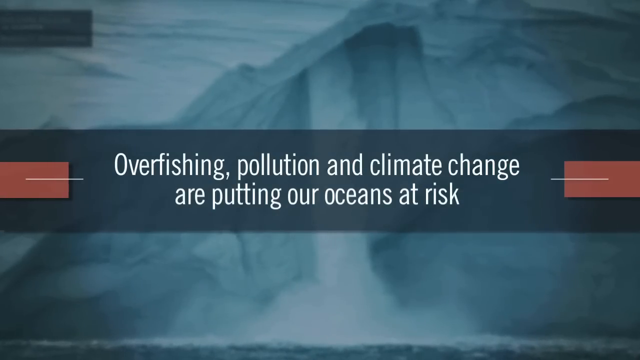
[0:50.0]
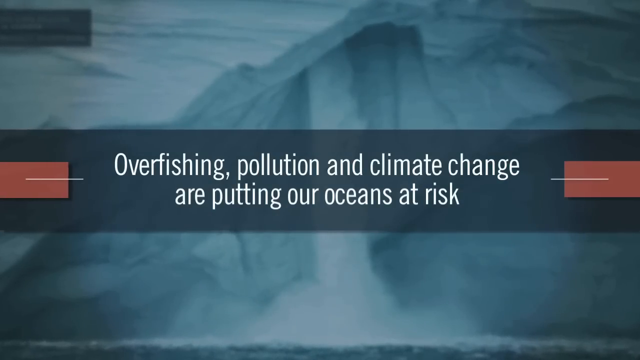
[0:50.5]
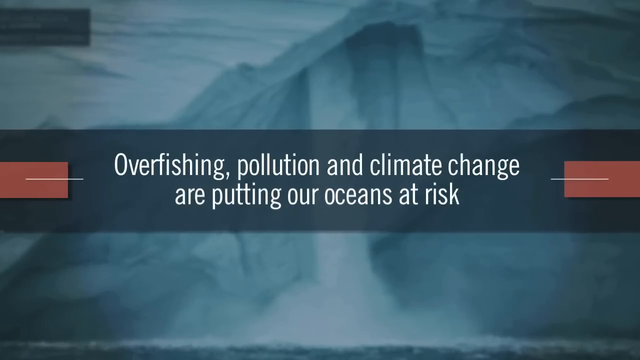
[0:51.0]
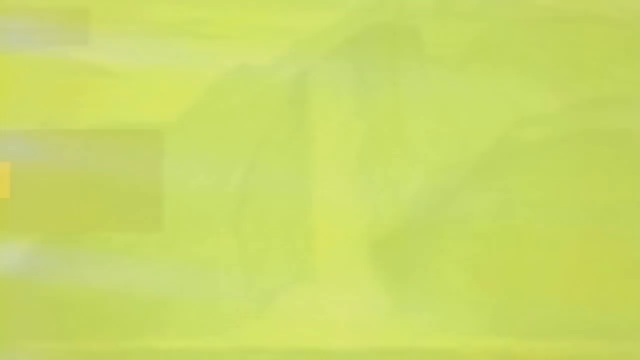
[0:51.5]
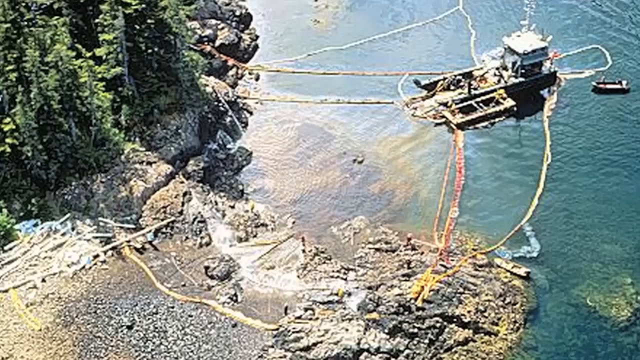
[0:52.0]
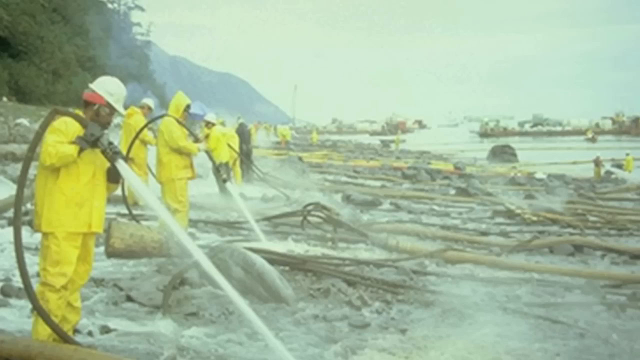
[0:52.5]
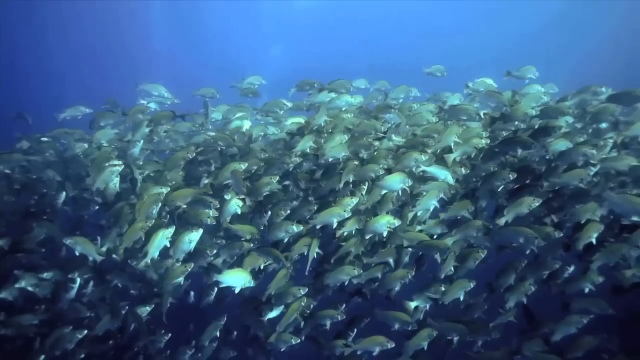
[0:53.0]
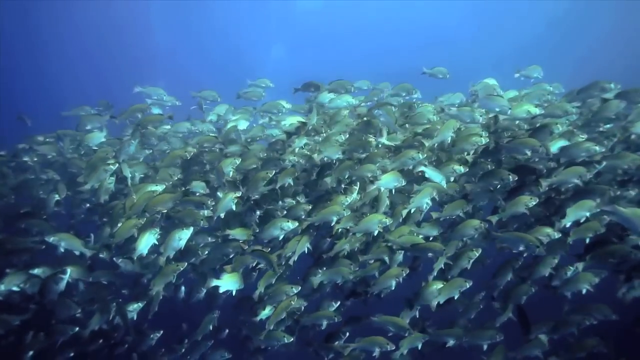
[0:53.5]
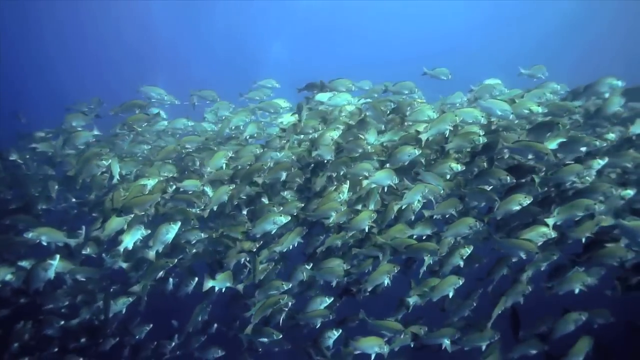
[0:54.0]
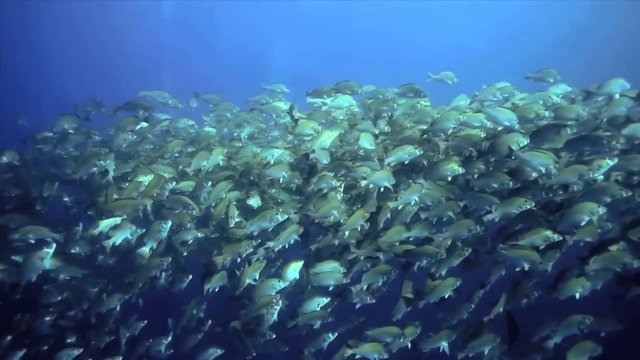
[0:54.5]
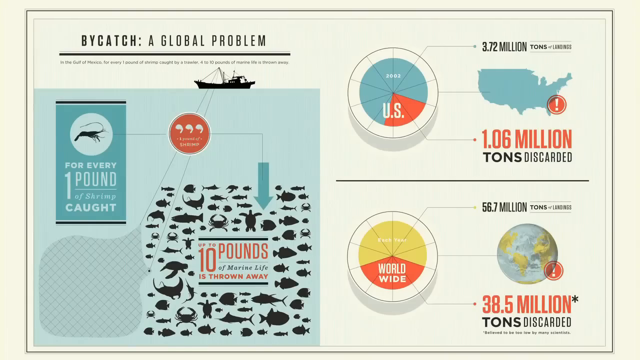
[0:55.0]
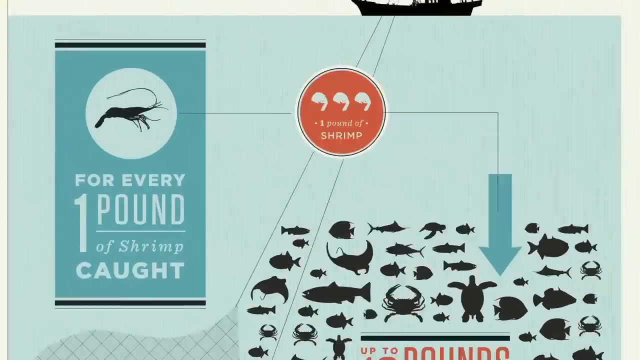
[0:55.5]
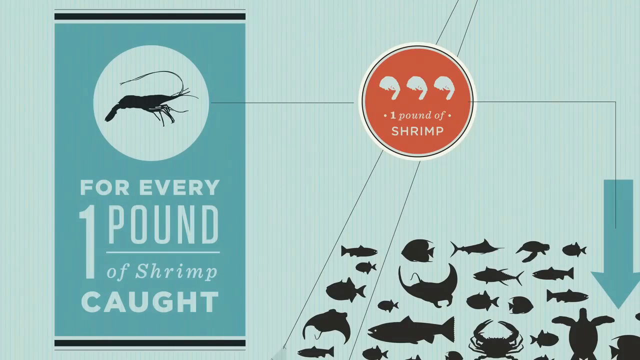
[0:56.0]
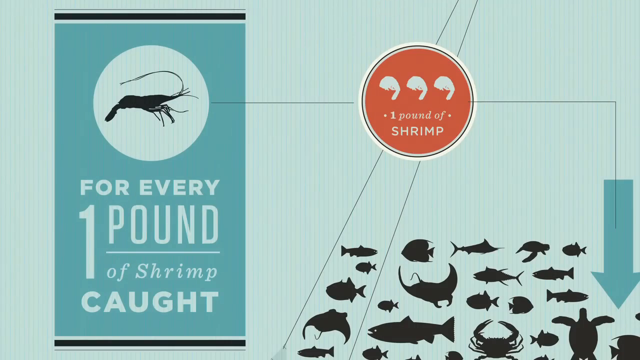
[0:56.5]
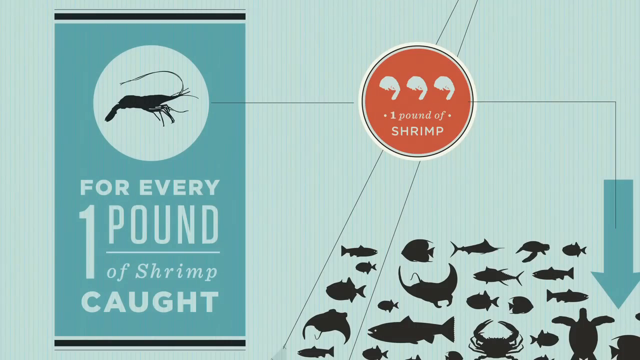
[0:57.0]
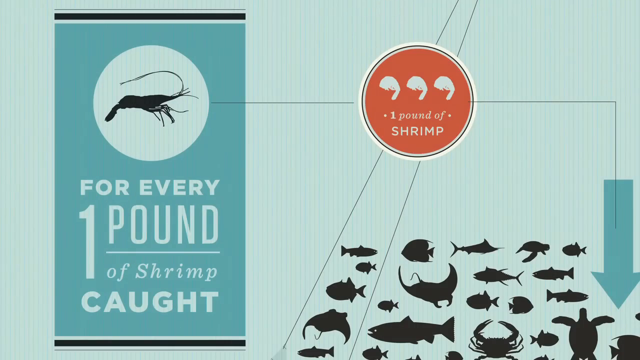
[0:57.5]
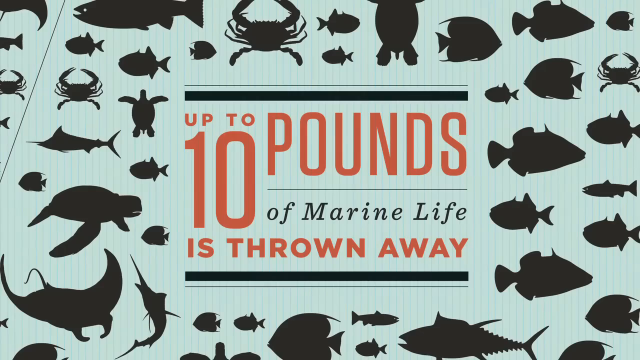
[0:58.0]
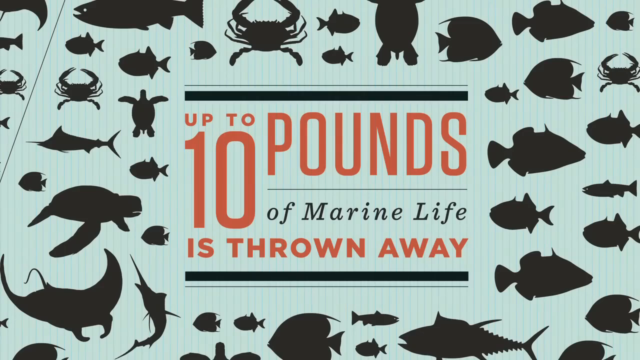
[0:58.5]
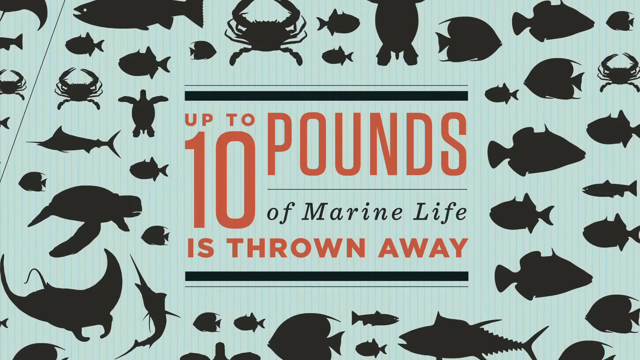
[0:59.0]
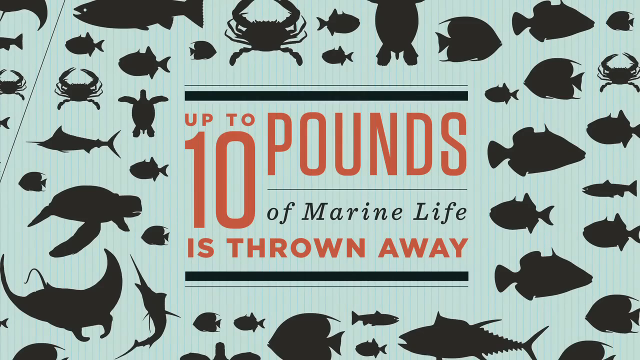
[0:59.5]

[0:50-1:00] The graphic reading "overfishing, pollution, and climate change are putting our oceans at risk" is still on screen. A zoomed-out view of a fishing boat follows, then an oil rig somewhat close to the shore with trees on the left. People stand on the beach with hoses. A school of fish, with a lot of fish, swims in the water. The view changes to a graphic that says "bycatch a global problem" and "for every one pound of shrimp caught up to 10 pounds of marine life is thrown away." It also says "1.6 million tons discarded" and "Worldwide, 3.5 million tons discarded." The camera zooms in on the one pound of shrimp graphic and then on the up to 10 pounds of marine life is thrown away graphic.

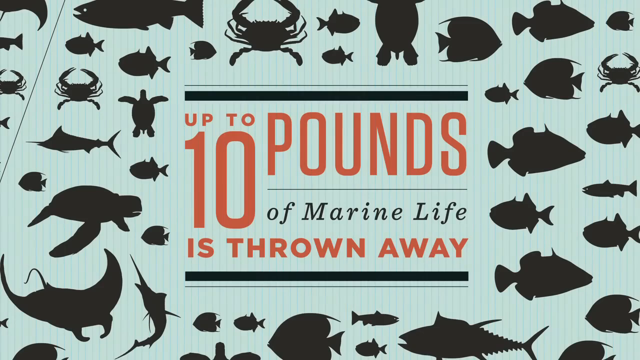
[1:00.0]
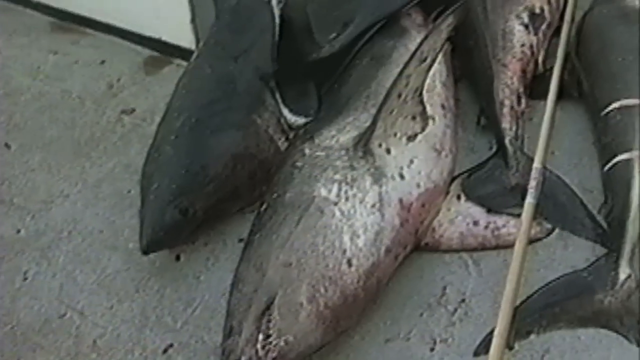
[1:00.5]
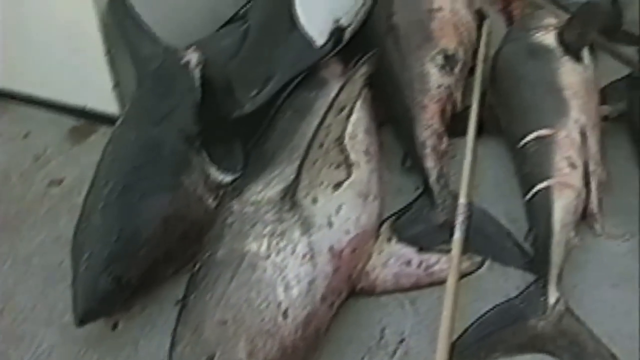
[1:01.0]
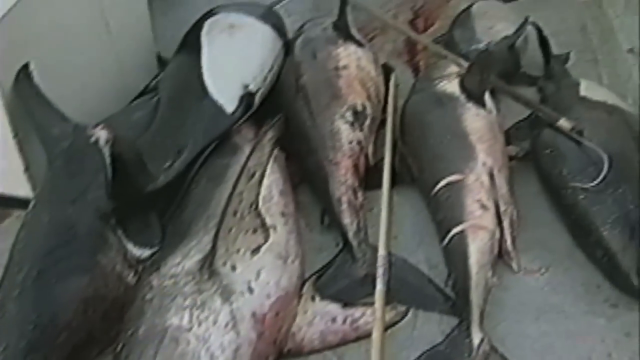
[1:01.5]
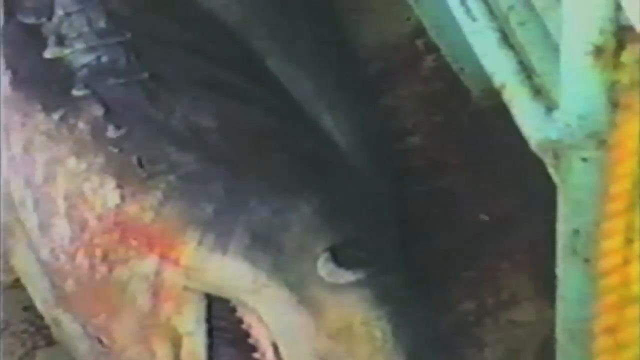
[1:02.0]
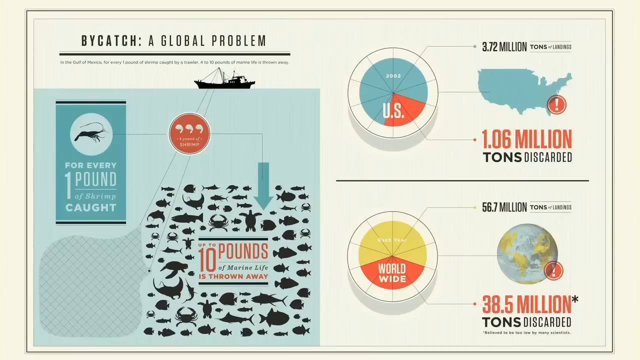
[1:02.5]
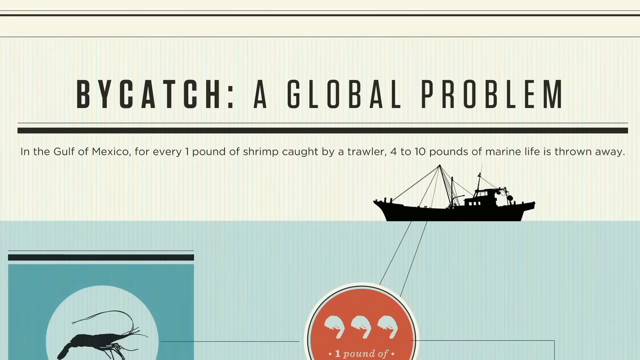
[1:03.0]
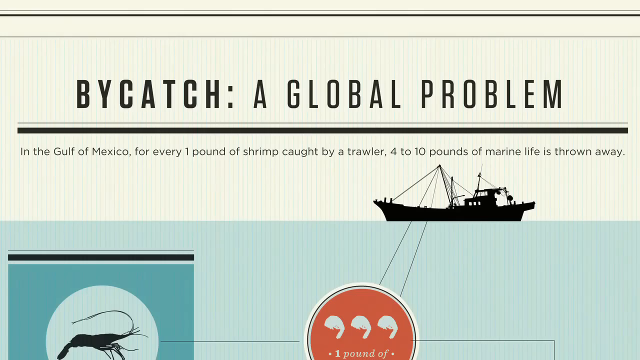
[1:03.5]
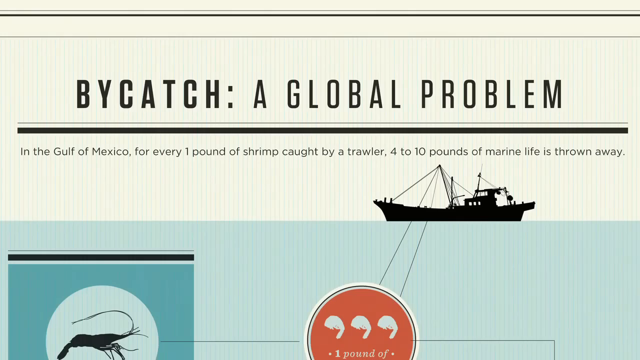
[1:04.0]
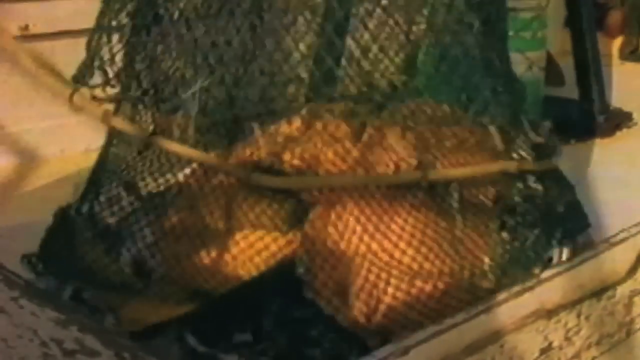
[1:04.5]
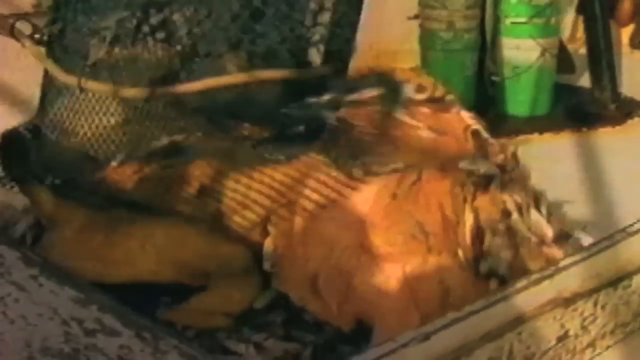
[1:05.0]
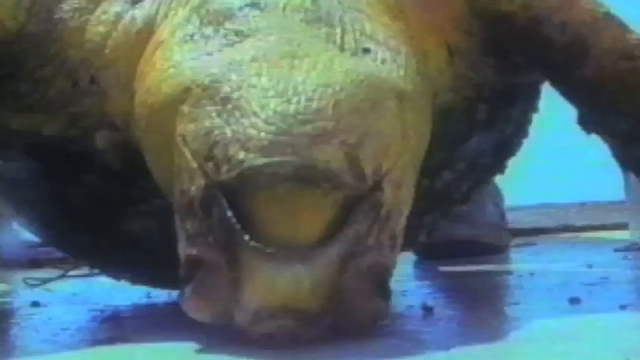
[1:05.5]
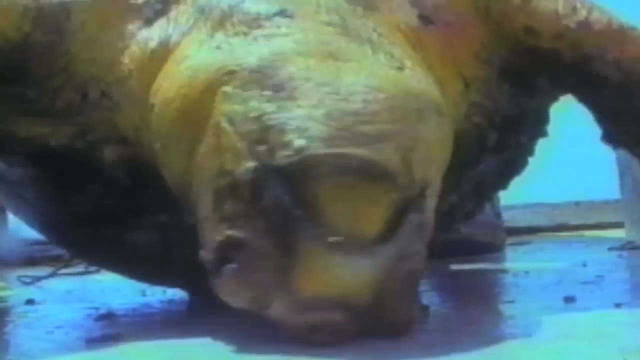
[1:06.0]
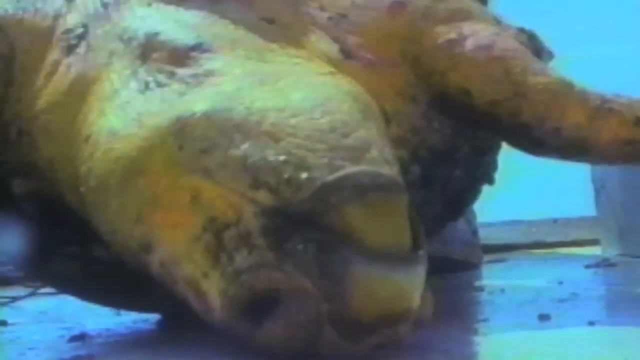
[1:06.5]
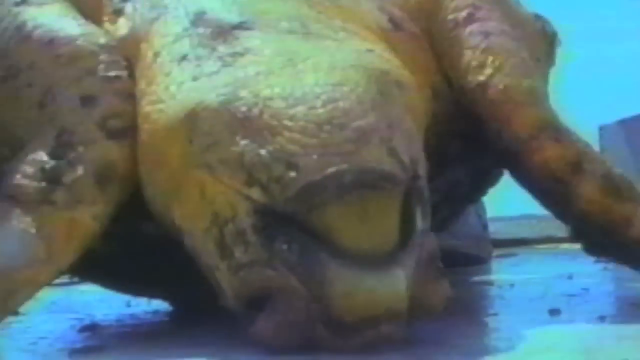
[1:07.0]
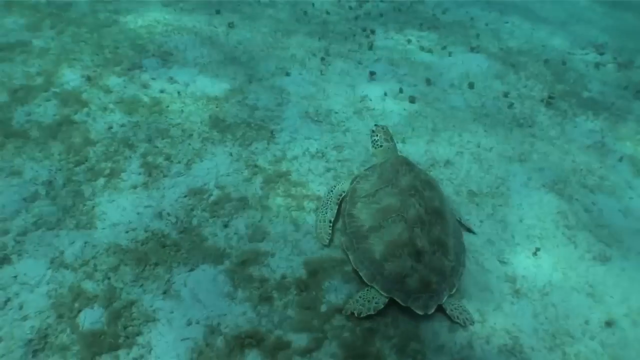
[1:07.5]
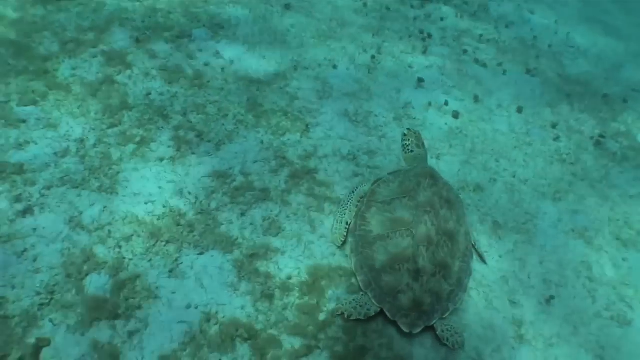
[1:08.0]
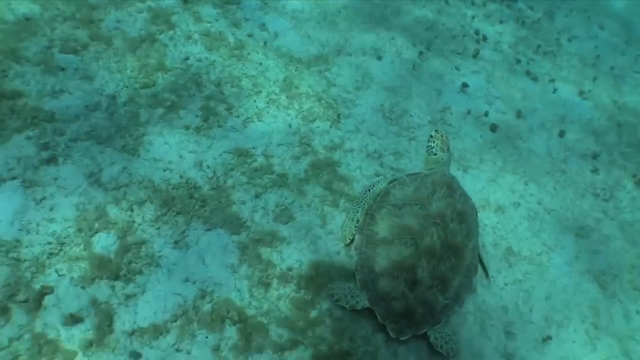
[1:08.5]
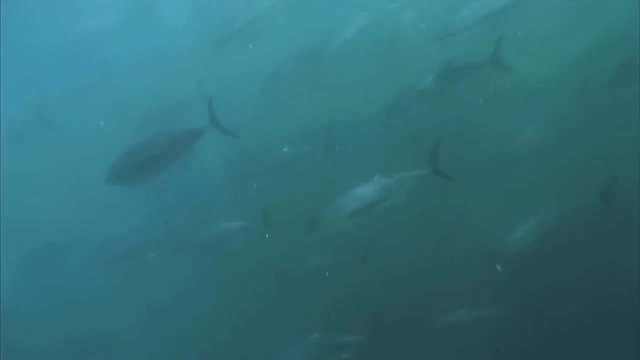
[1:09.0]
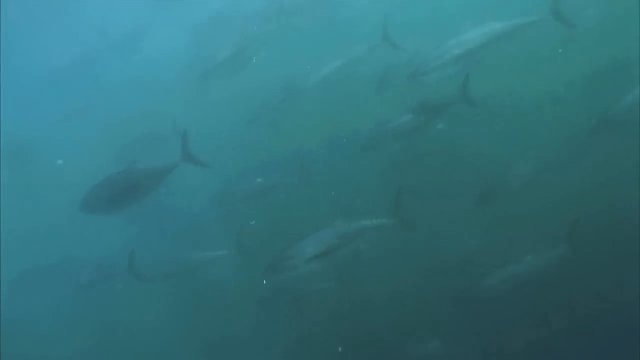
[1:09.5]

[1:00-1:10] The graphic about 10 pounds of marine life being thrown away is on screen, then the scene changes to four or five dead sharks on a ship deck. The camera pans over them and zooms in on one of them. The video goes back to the "bycatch a global problem" graphic. Turtles and fish are dumped out of a net onto a ship deck, and the camera zooms in on one turtle struggling on the deck. The scene changes to an uncaught turtle swimming in the water, followed by a school of fish also swimming in the water, a little fuzzy to see.